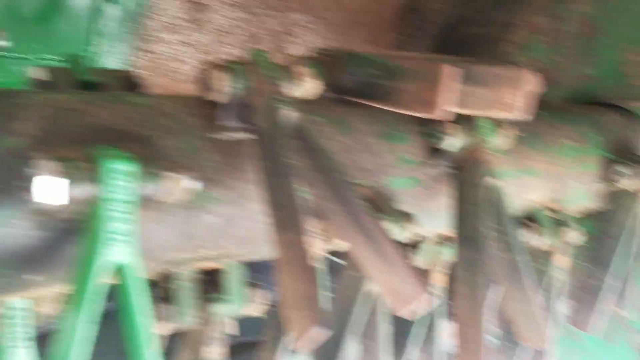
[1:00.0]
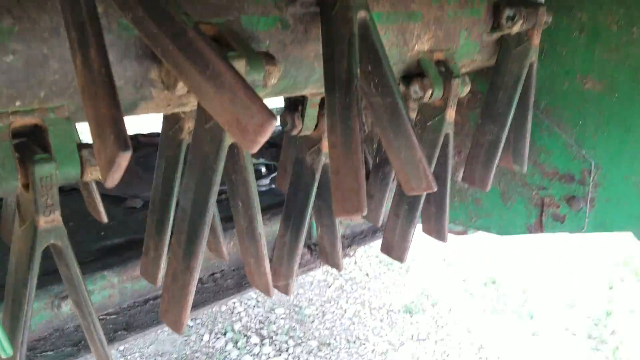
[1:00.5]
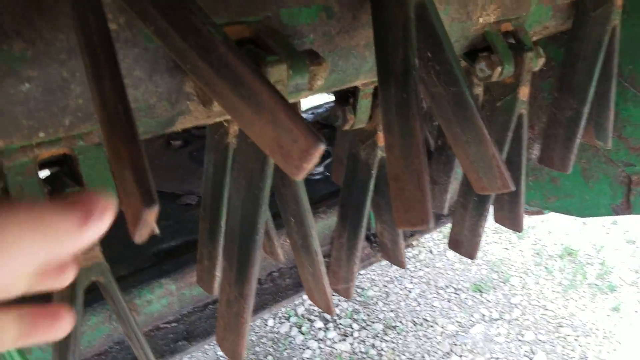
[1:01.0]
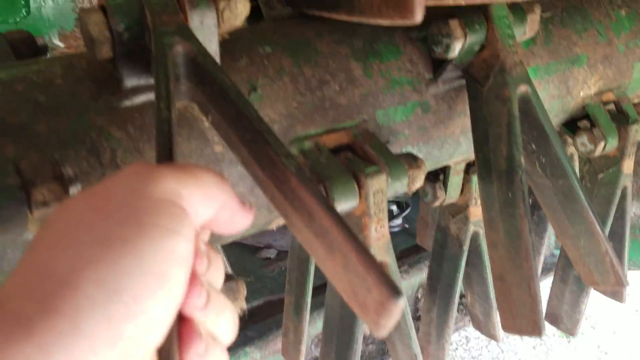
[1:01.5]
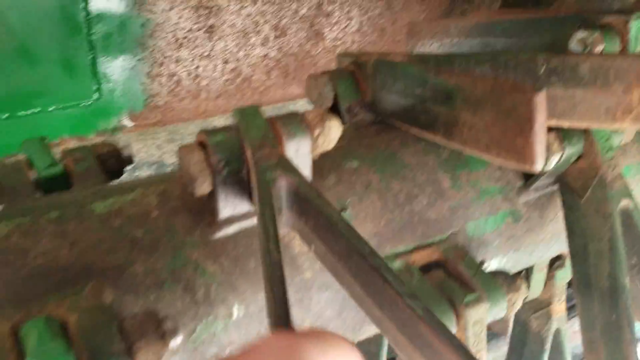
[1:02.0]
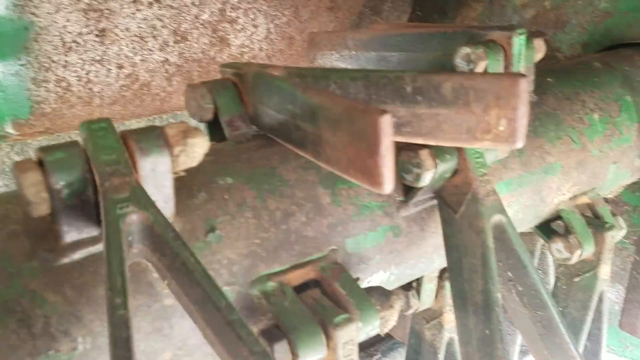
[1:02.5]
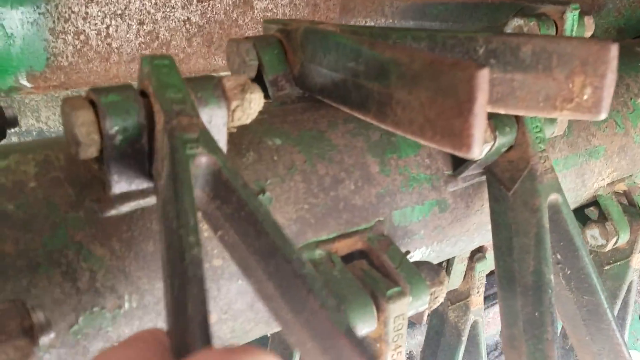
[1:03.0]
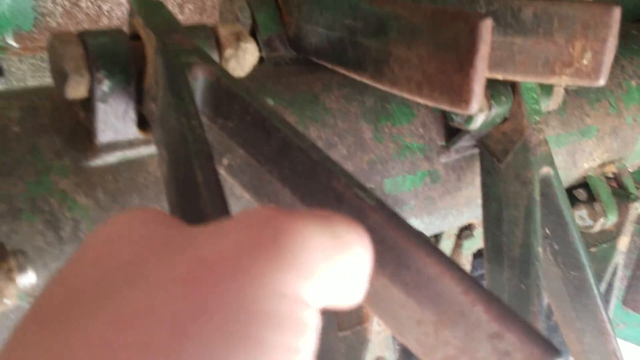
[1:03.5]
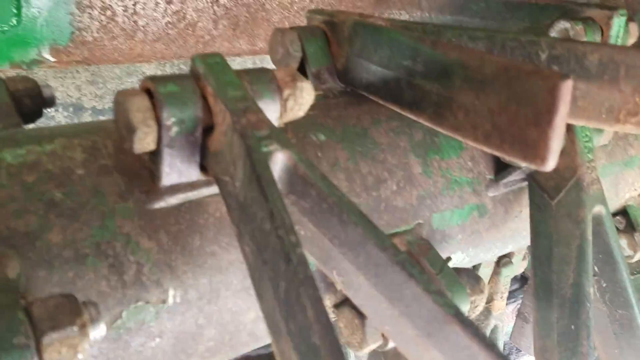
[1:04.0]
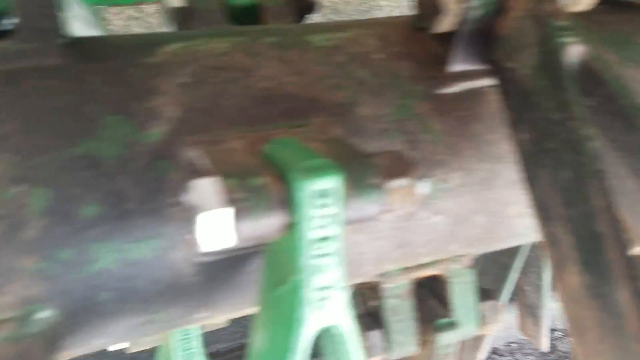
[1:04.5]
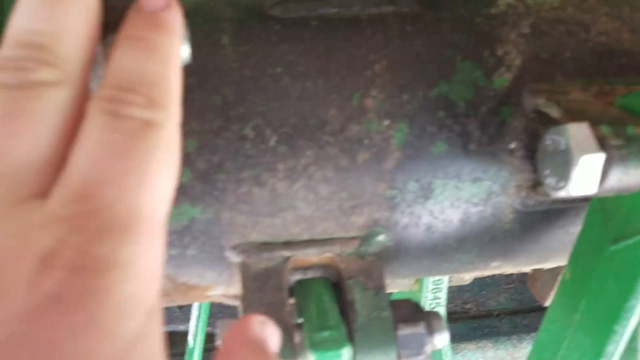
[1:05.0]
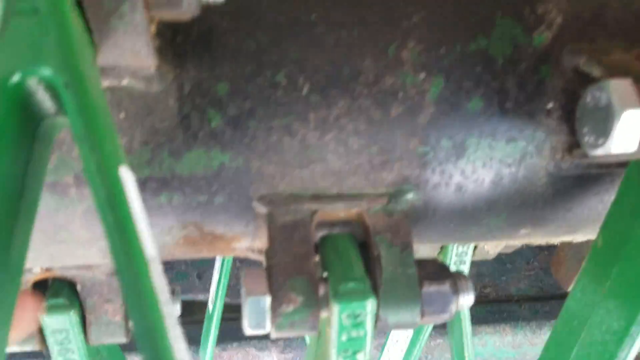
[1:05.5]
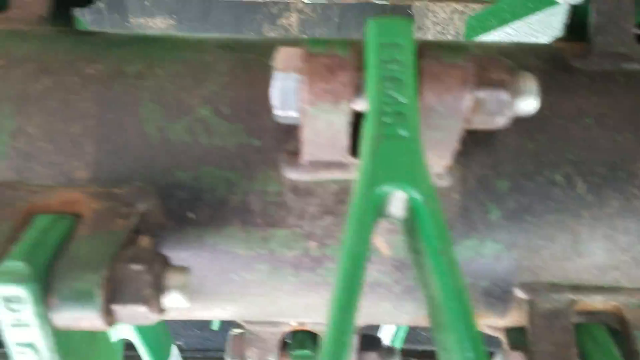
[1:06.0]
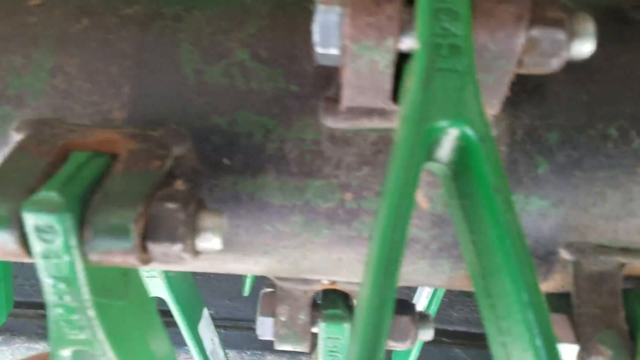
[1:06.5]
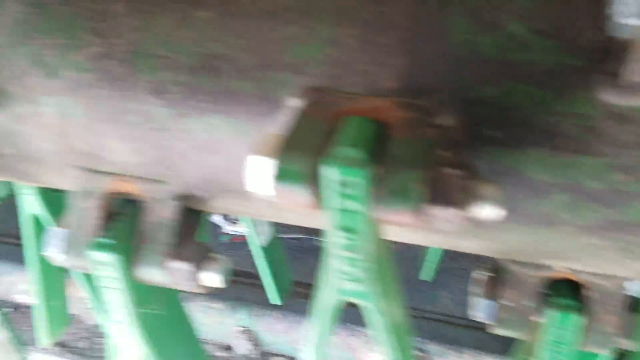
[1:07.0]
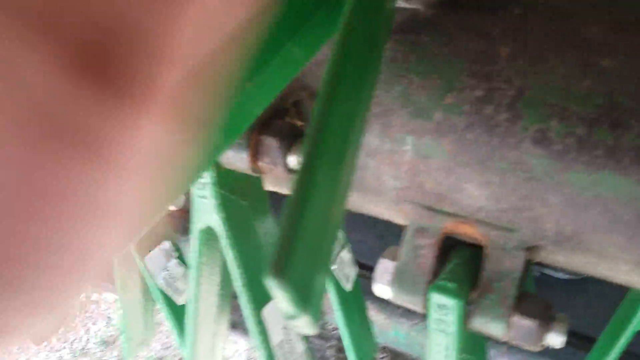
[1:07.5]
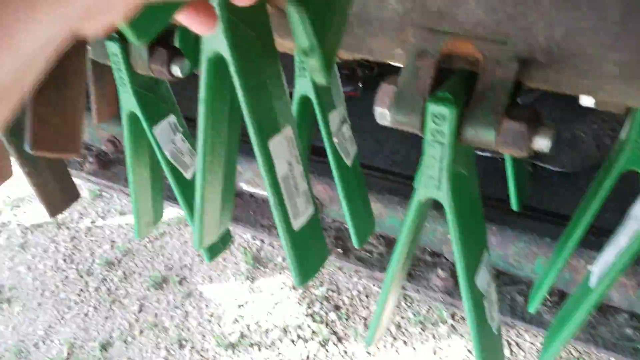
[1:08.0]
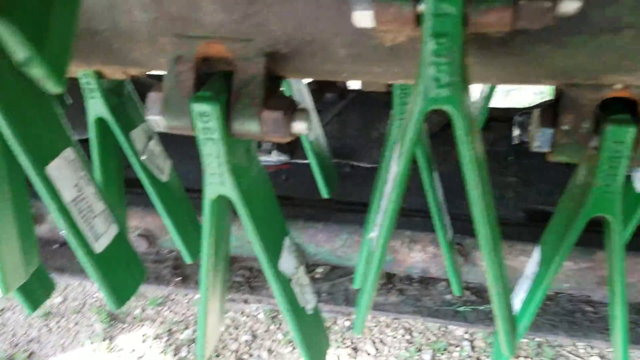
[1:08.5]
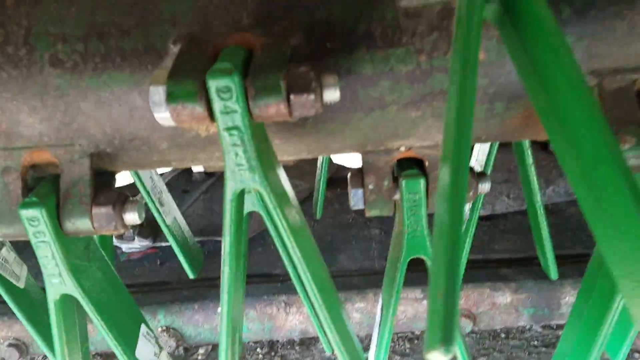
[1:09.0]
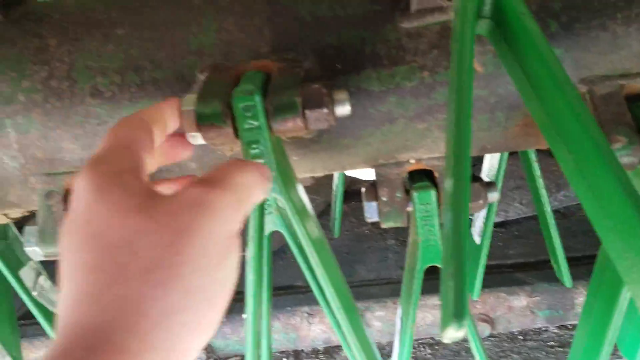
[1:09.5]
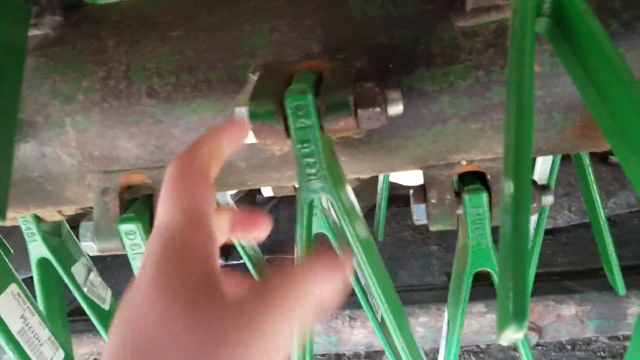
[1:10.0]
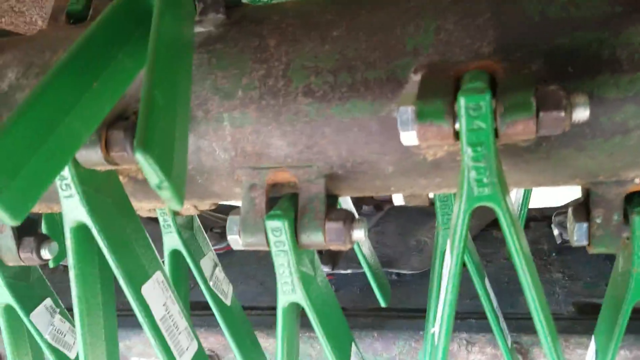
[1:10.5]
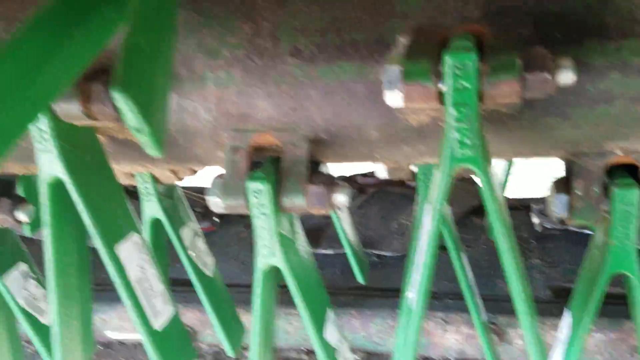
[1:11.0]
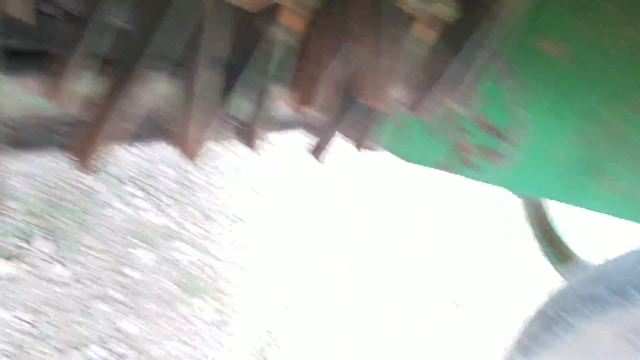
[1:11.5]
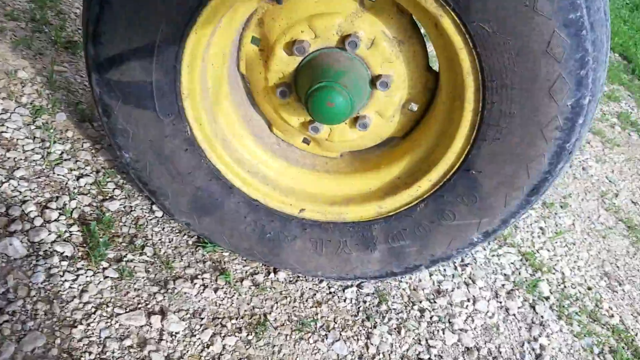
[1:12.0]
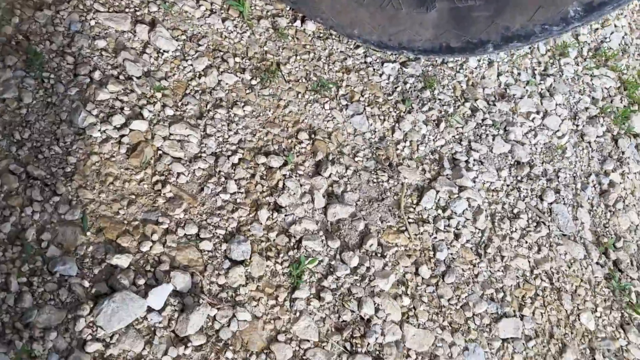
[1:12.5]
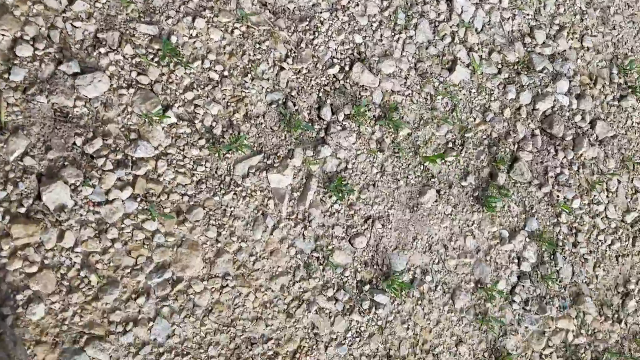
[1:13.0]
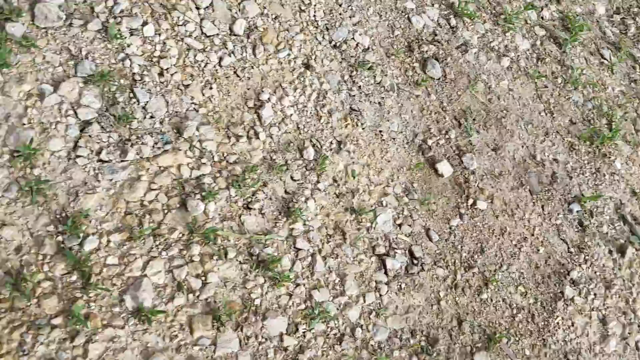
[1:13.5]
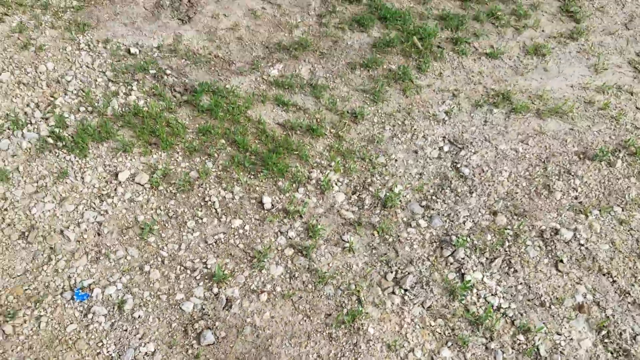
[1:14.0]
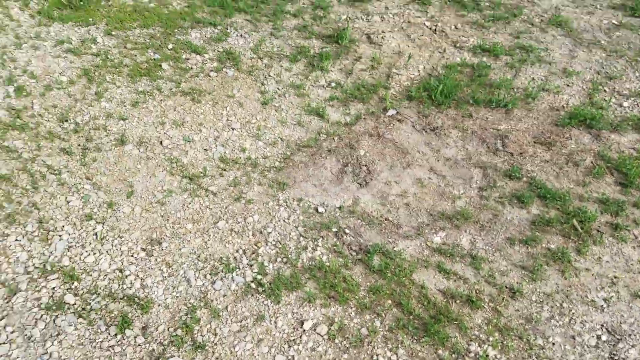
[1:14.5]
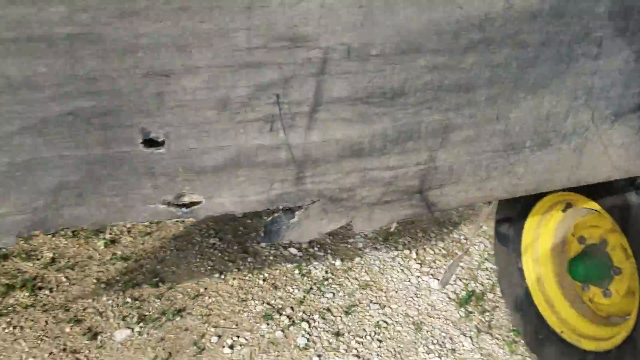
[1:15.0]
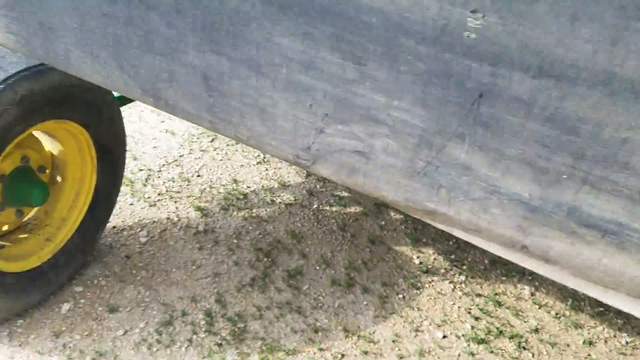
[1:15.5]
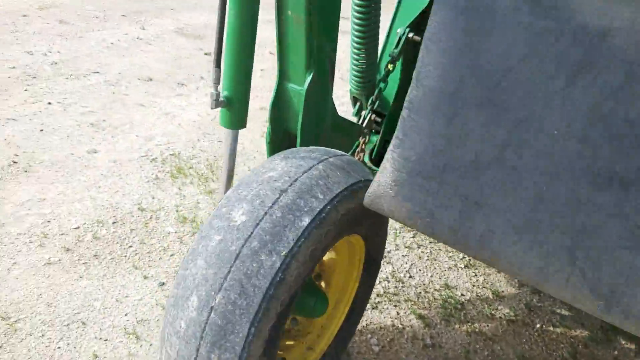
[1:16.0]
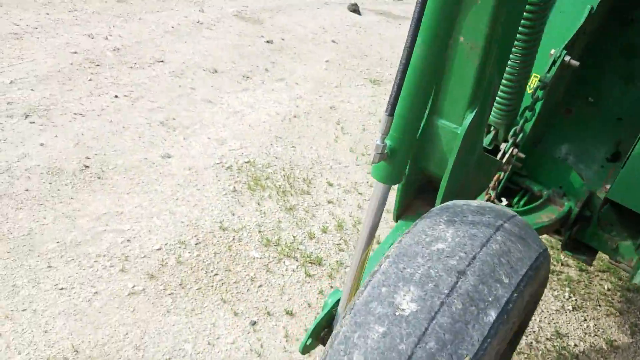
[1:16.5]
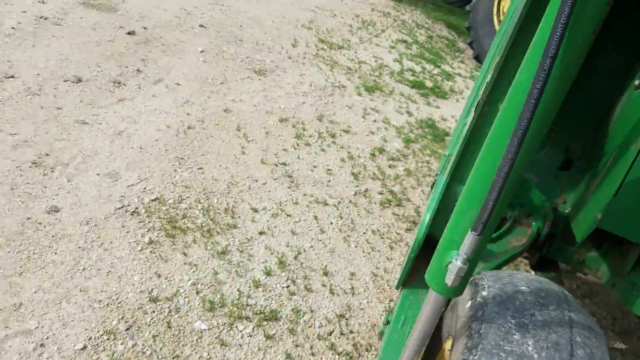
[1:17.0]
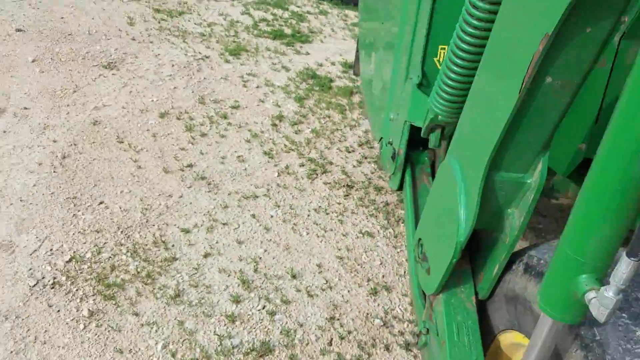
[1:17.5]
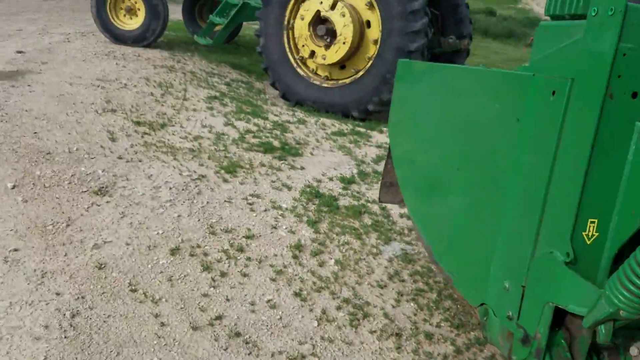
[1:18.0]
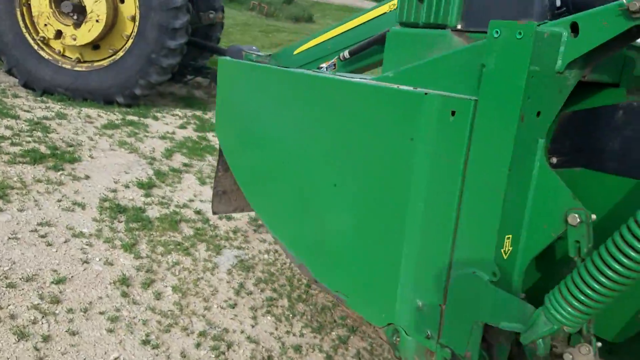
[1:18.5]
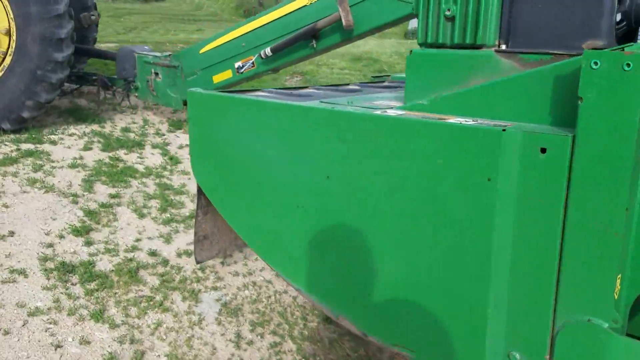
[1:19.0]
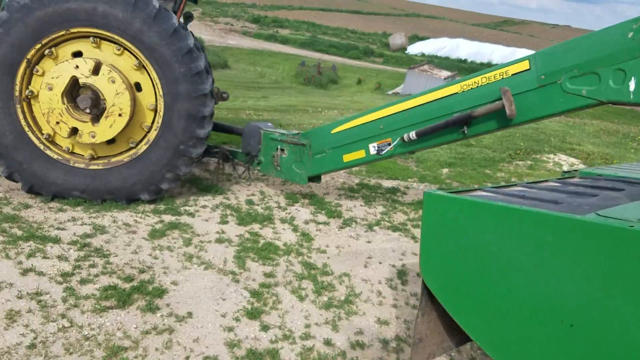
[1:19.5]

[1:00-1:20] In what looks like a homemade video about a John Deere tractor and a John Deere combine, the farmer shows the underside of the combine and pulls on each of the parts, apparently to make sure they are attached well; the parts have bolts and nuts going through them. The pieces are shaped like wishbones and are painted green, though some of them have lost their paint. There is a big spring on the side. Another shot shows the tractor itself. There are some hydraulic pieces, at least on the combine, and a hydraulic part is attached on the side of the piece that connects the tractor to the combine.